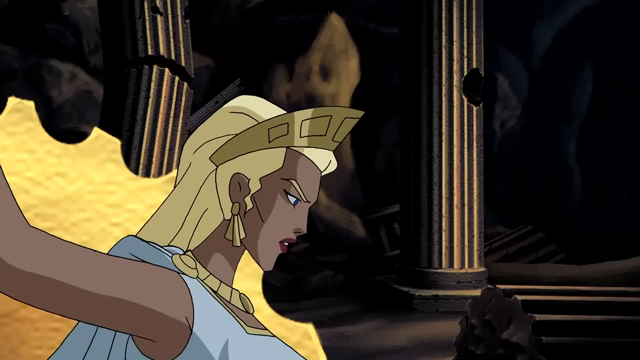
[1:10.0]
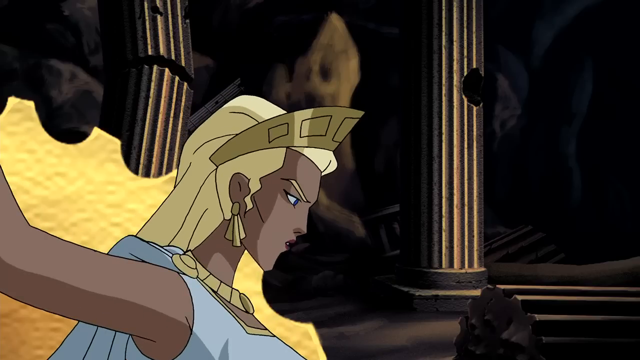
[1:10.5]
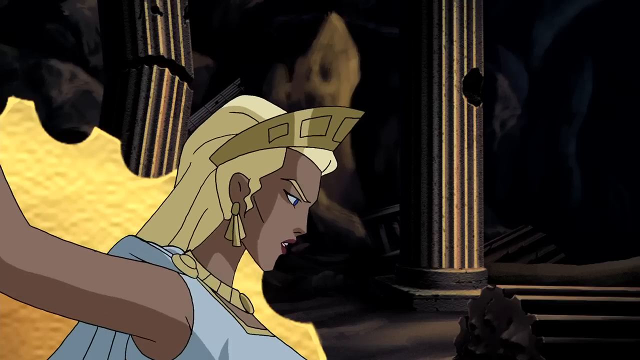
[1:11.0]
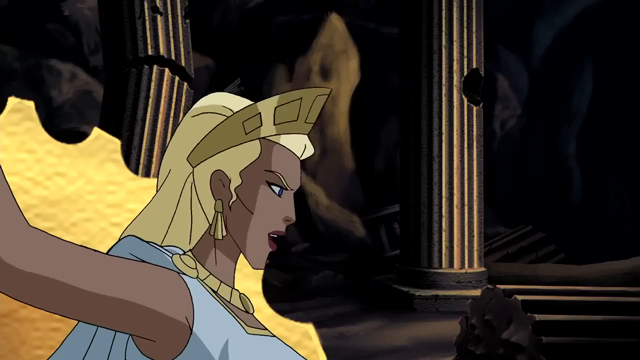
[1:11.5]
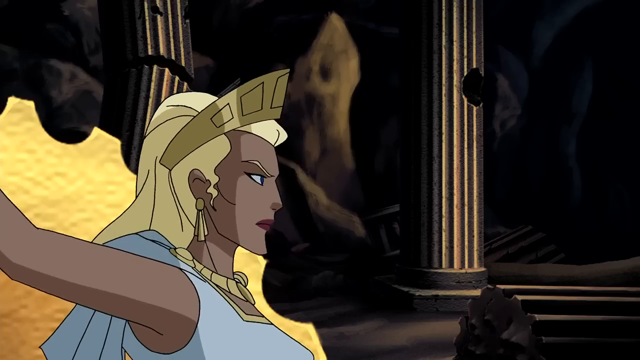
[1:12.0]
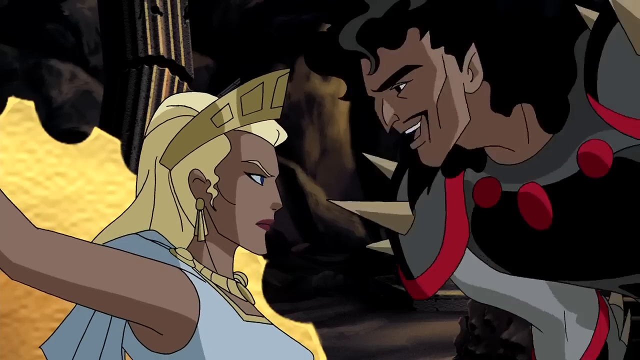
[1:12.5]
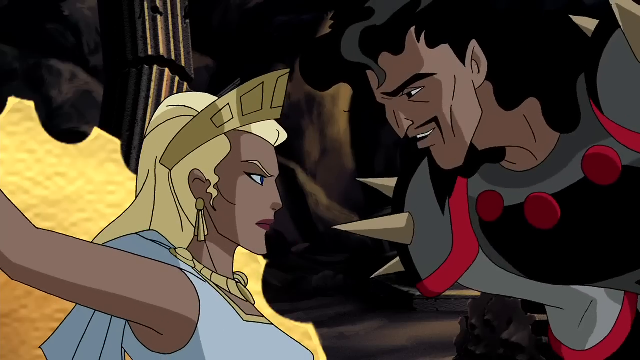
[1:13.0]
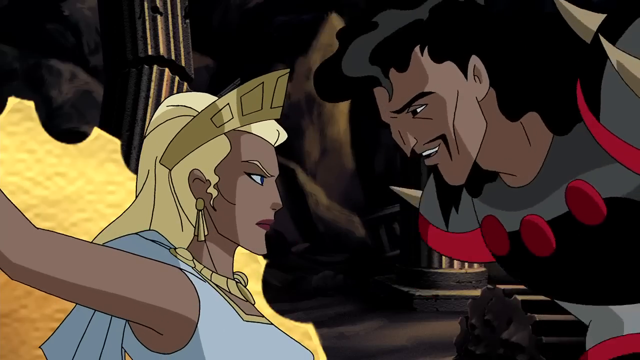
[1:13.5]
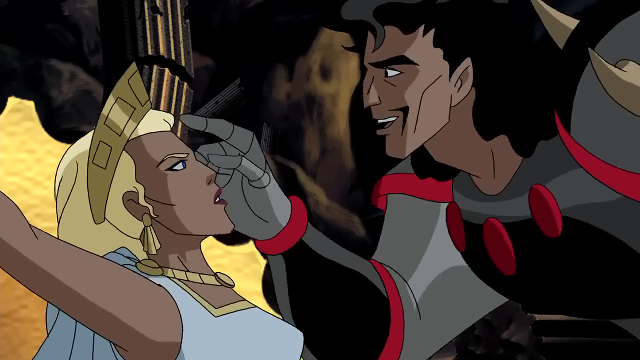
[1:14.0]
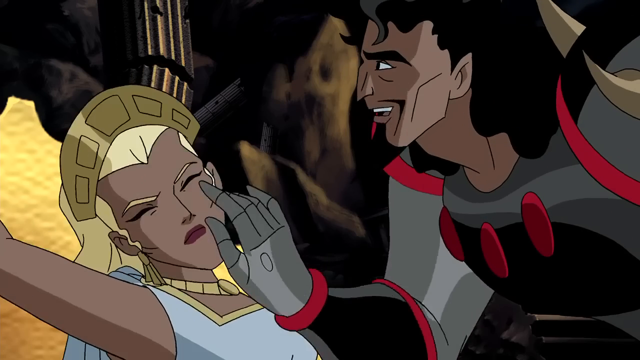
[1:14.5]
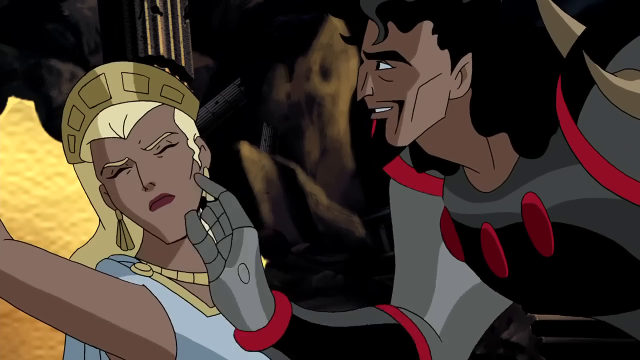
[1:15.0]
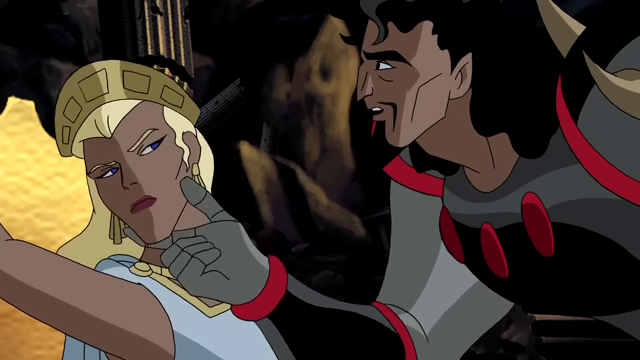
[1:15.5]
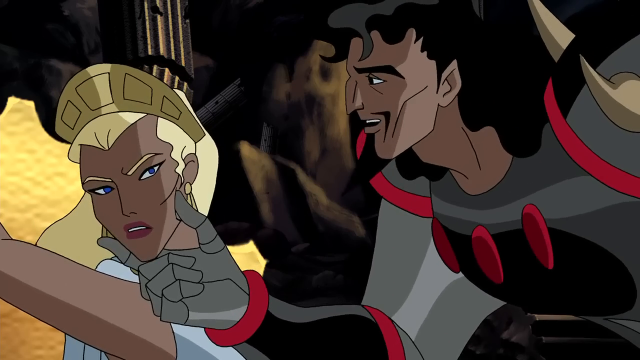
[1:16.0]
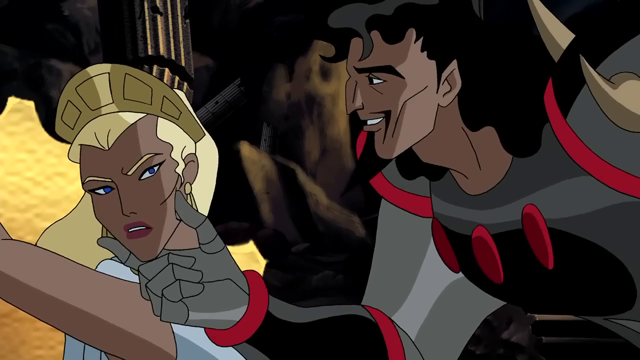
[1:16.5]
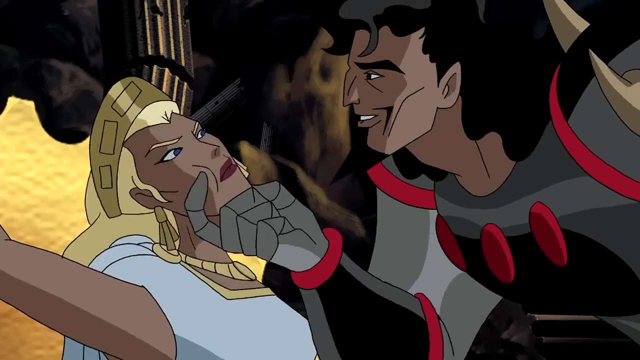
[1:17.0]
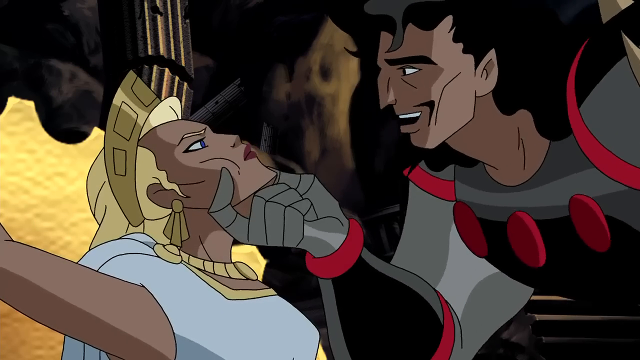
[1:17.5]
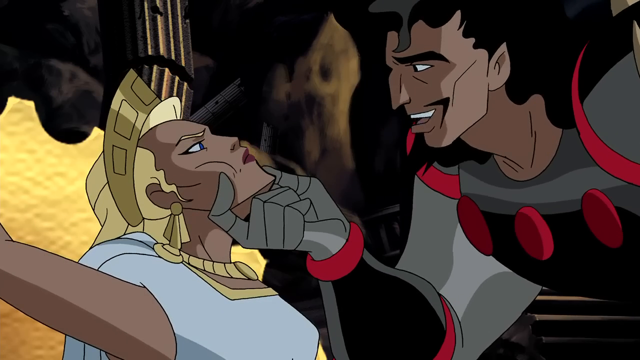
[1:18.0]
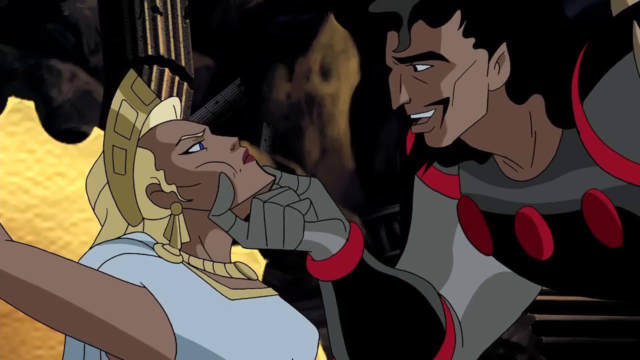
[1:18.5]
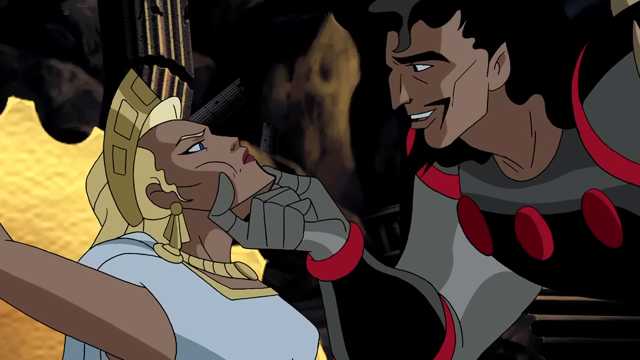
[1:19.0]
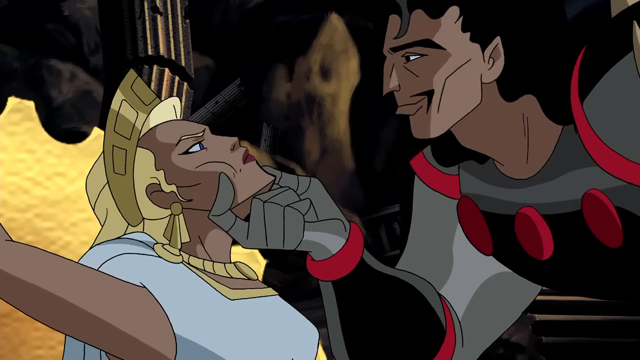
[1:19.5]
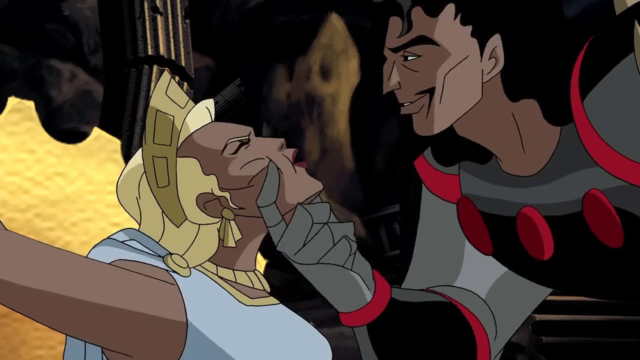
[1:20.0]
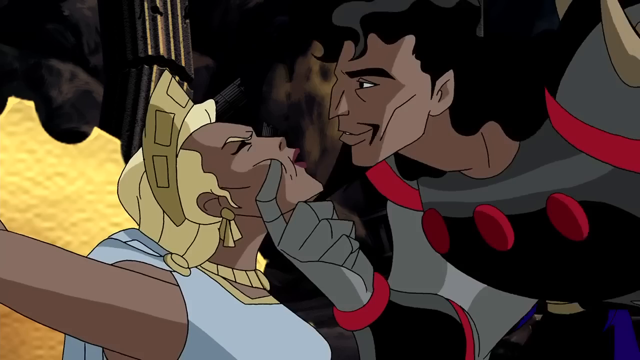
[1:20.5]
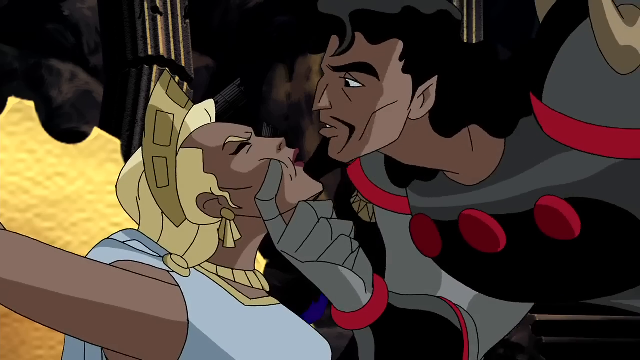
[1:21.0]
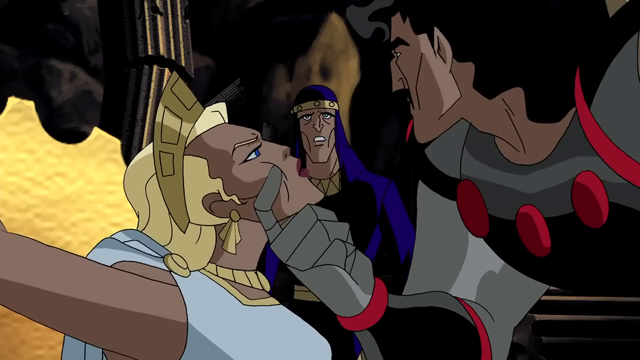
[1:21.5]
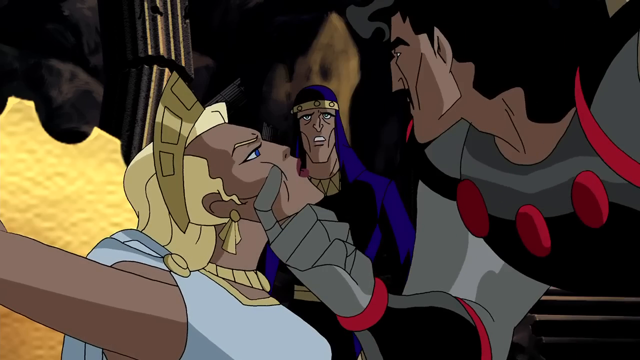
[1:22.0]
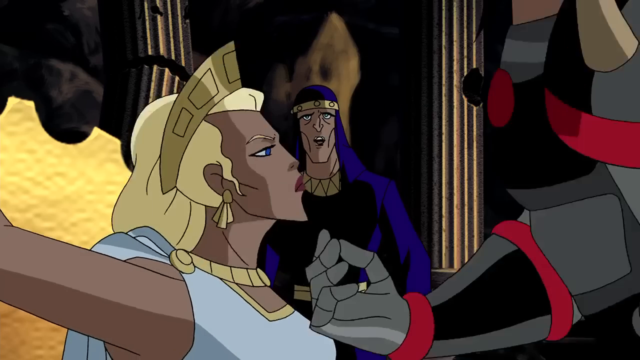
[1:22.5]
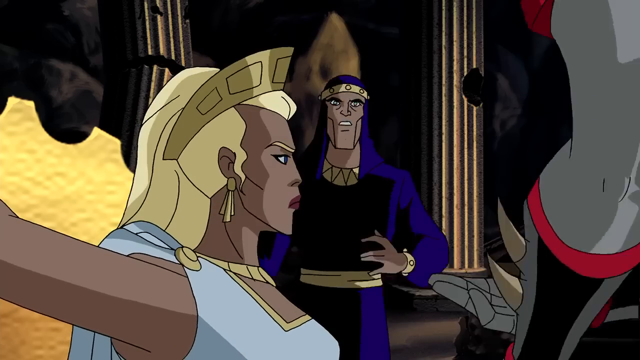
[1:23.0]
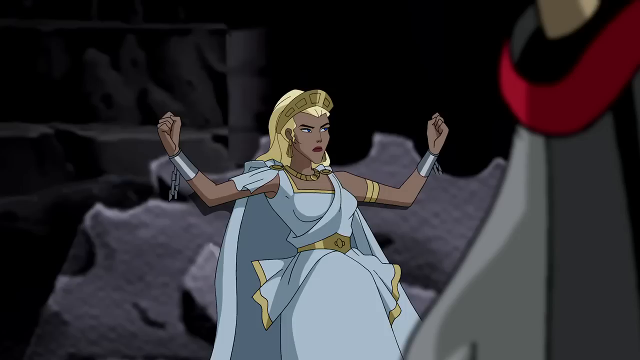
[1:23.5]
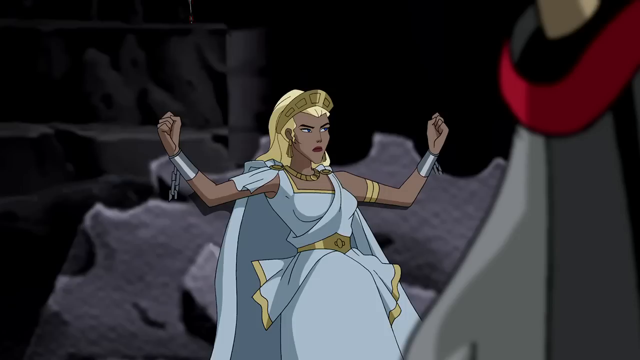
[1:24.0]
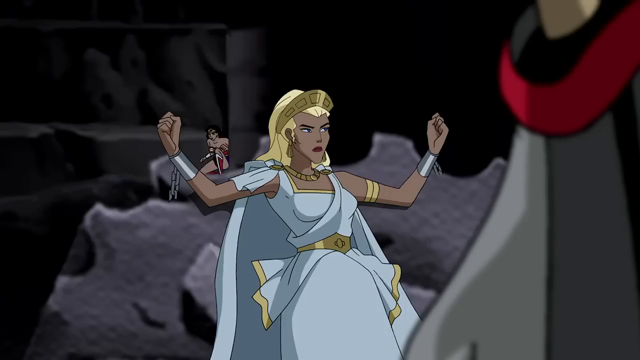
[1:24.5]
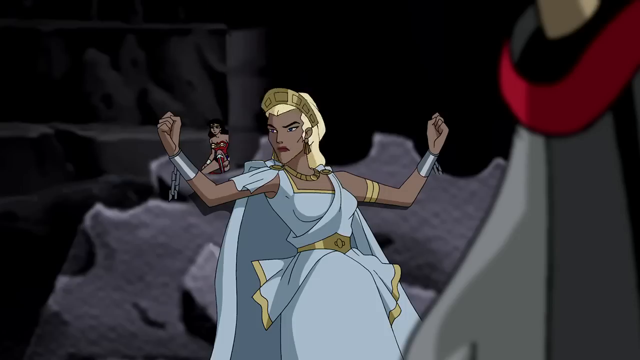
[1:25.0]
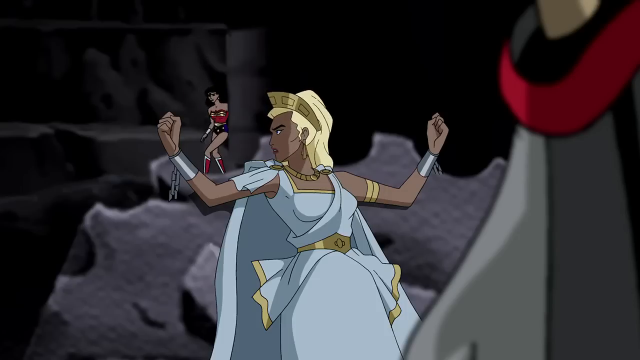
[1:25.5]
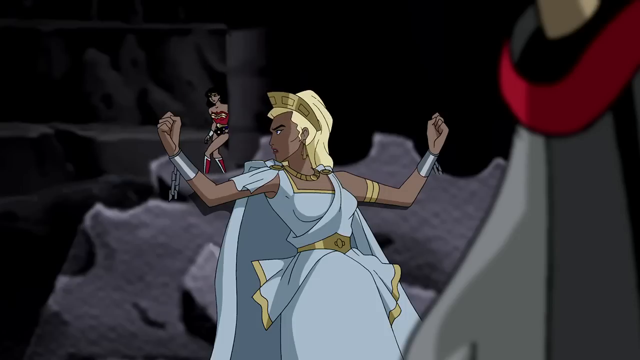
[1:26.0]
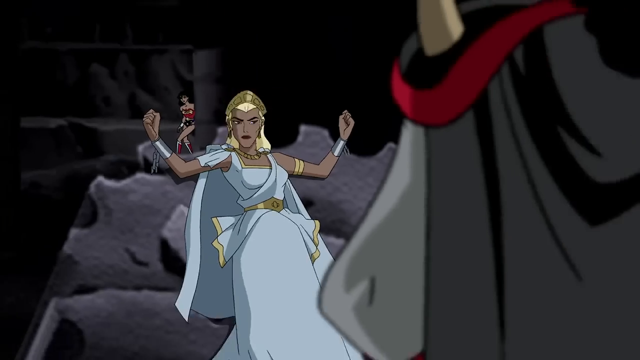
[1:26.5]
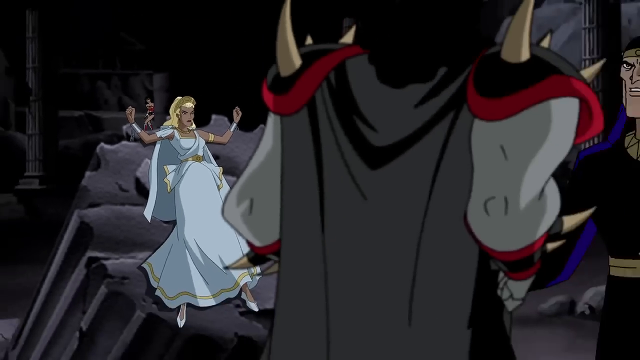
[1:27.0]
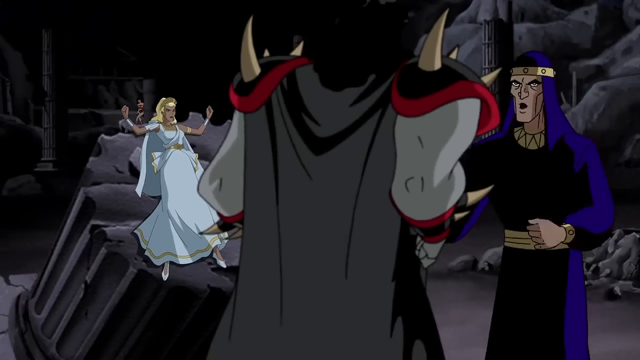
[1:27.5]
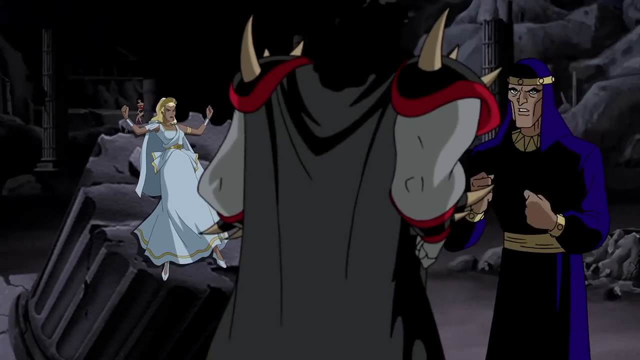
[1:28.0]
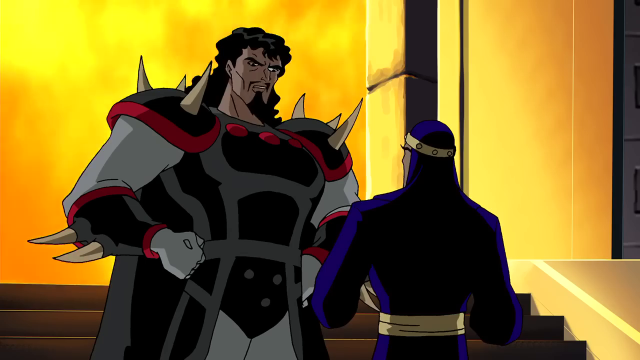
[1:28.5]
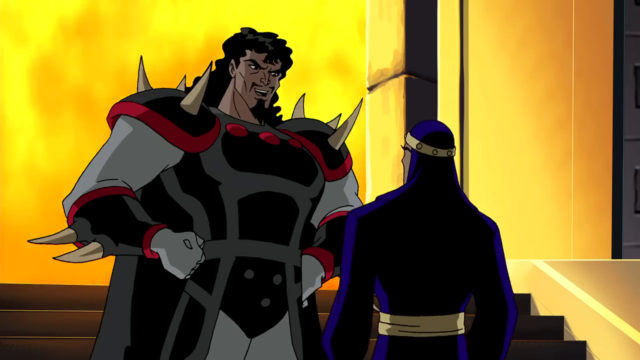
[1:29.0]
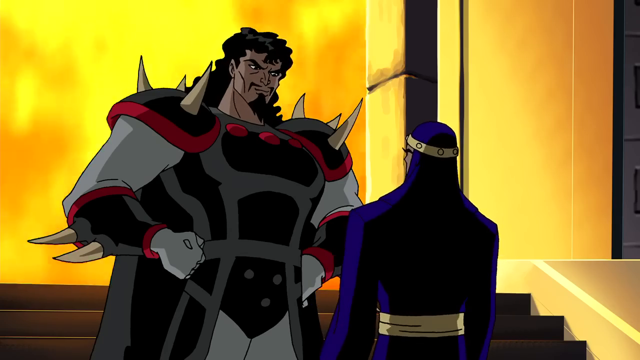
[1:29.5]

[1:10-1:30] The woman is still tied to the top of the leaning column. In the background are two additional columns: the one on the right side of the screen has a hole in it, and the one on the left is broken in half, with the two halves looking like they are splitting apart. The woman talks while looking down at the man in the black, gray and red outfit. He walks up to her, lifts his arm to her face and points his index finger at her temple with a mean expression. He rubs his hands down the side of her face, grips her chin, lifts her face up to his and brings his face close to hers, almost as if he is about to kiss her, but he backs away as the person in the blue and black outfit approaches them. What looks like Wonder Woman, very tiny, lands on the woman's right shoulder and then disappears from the screen.